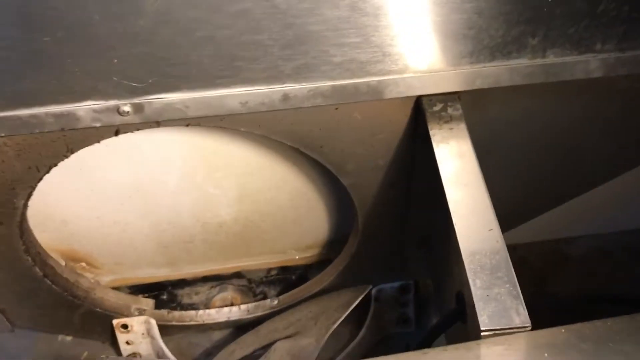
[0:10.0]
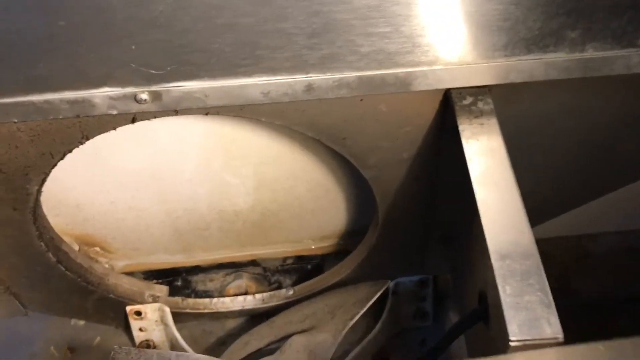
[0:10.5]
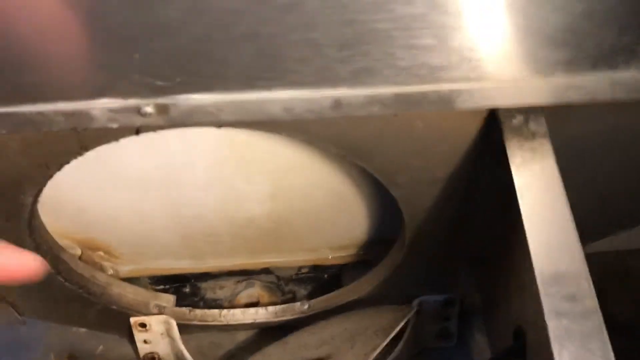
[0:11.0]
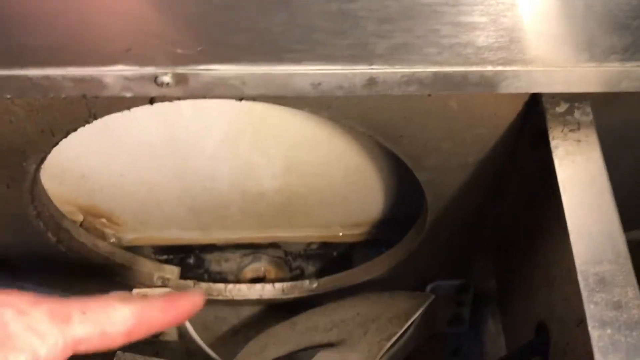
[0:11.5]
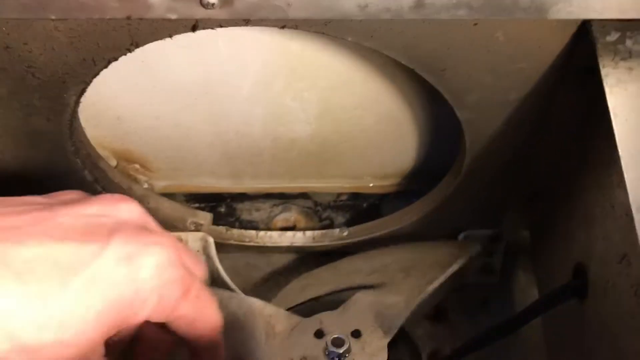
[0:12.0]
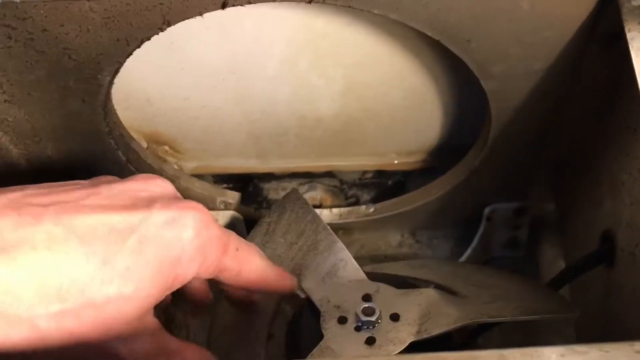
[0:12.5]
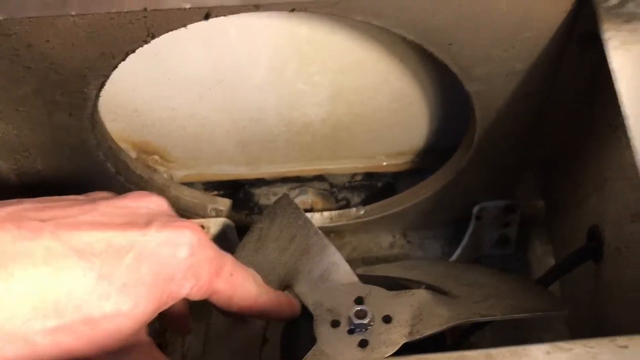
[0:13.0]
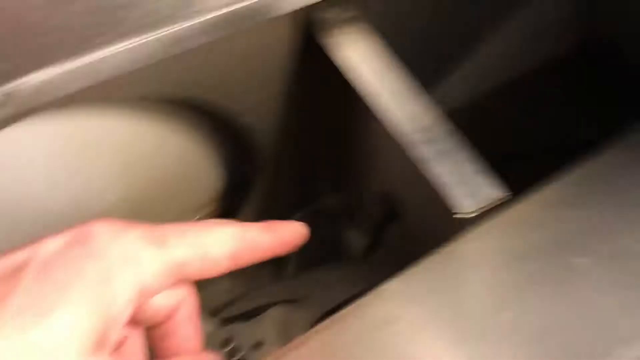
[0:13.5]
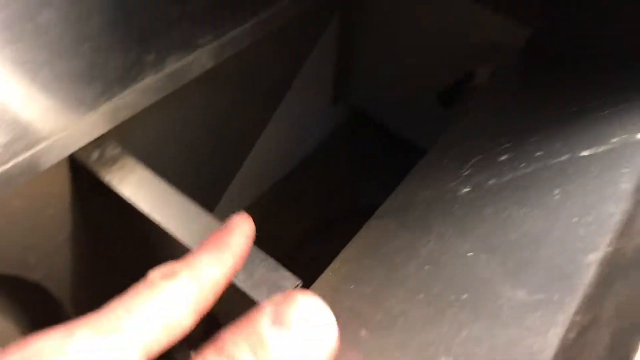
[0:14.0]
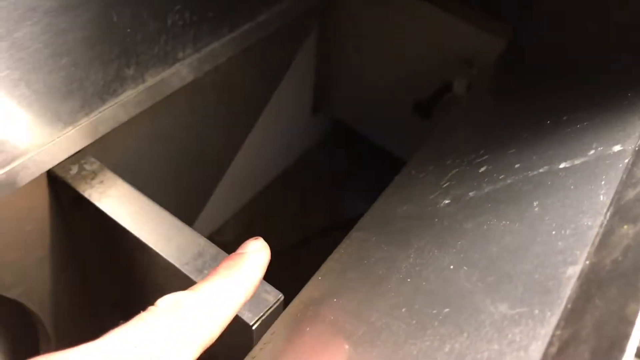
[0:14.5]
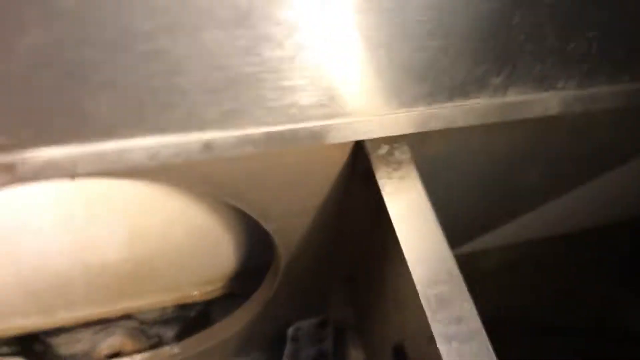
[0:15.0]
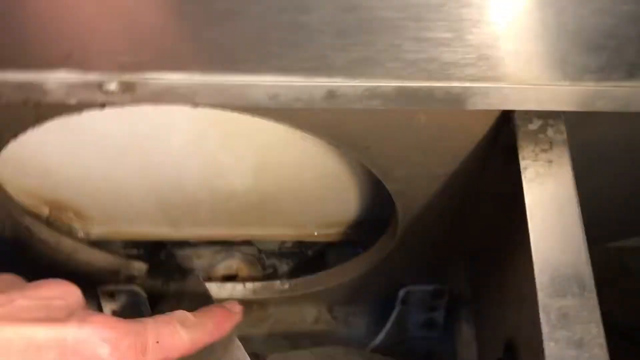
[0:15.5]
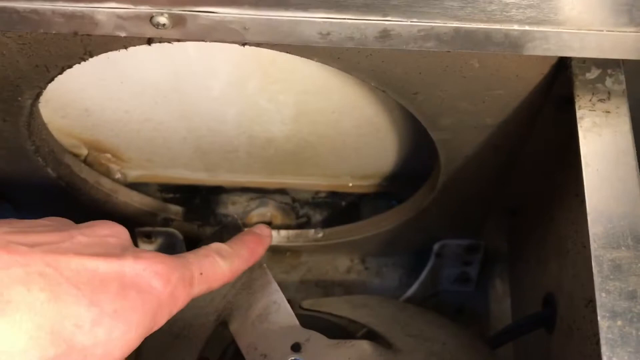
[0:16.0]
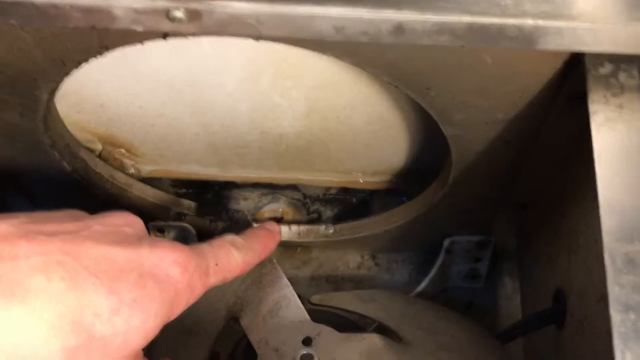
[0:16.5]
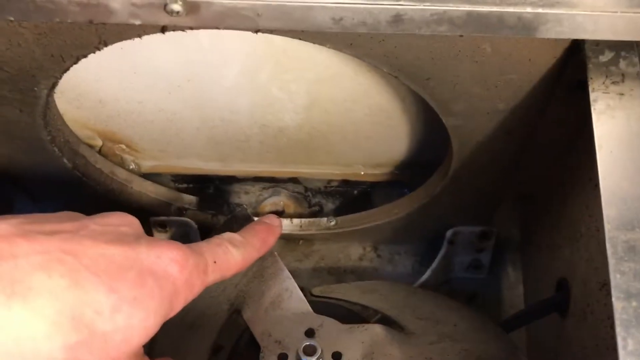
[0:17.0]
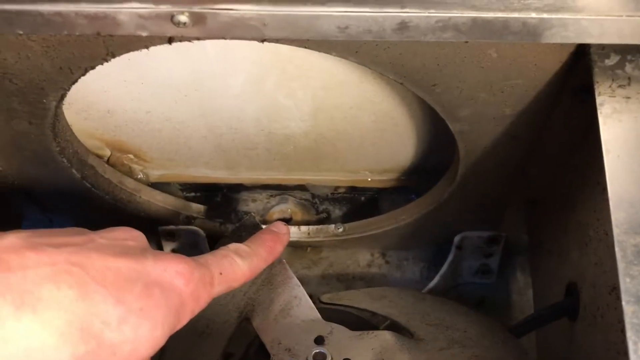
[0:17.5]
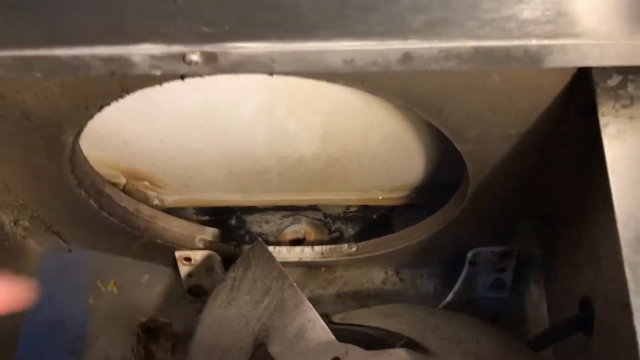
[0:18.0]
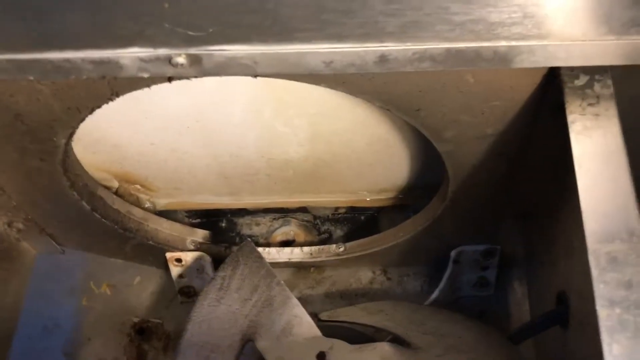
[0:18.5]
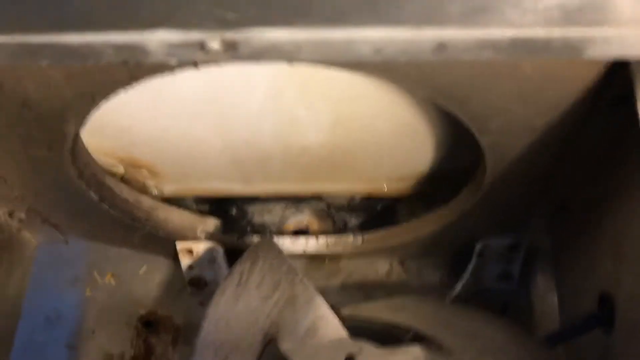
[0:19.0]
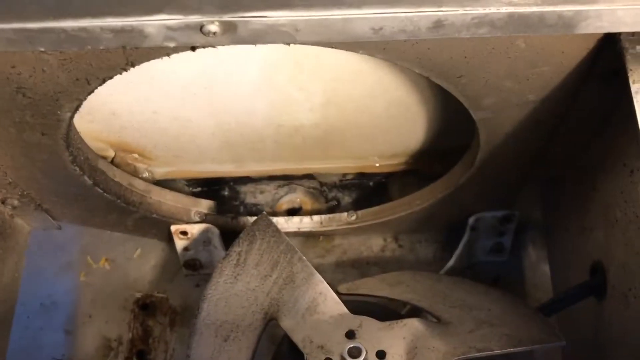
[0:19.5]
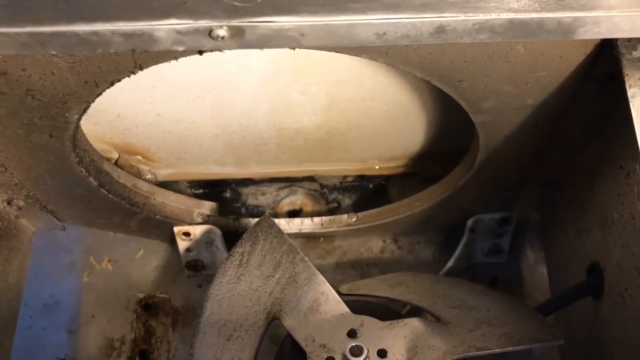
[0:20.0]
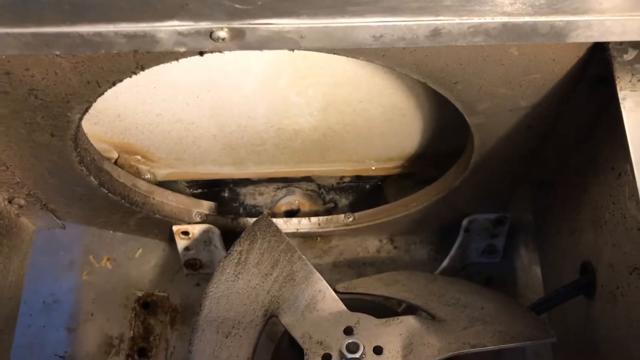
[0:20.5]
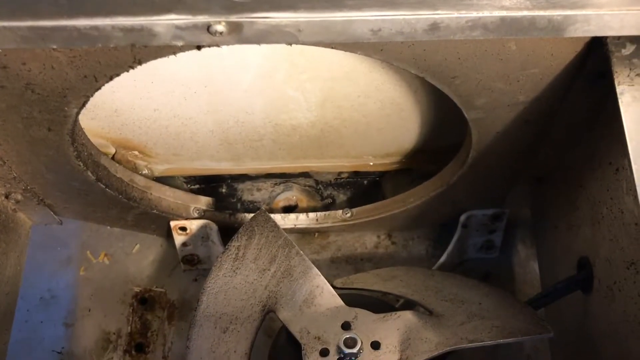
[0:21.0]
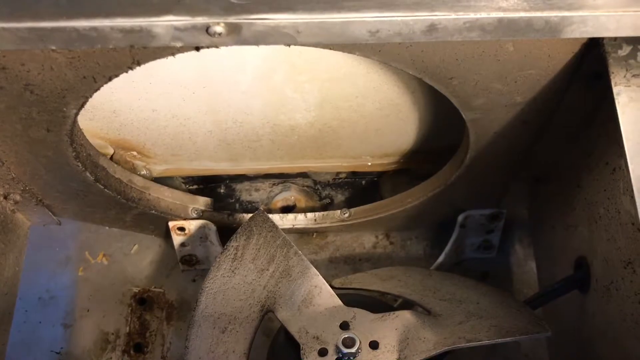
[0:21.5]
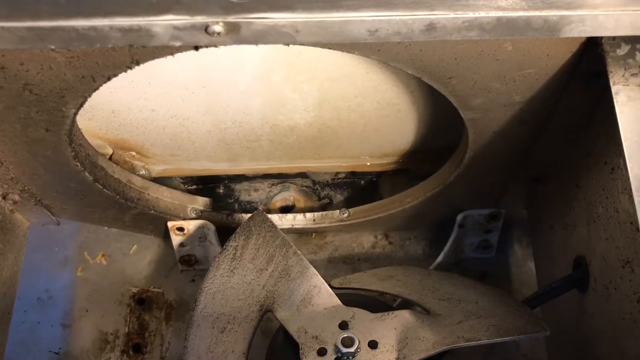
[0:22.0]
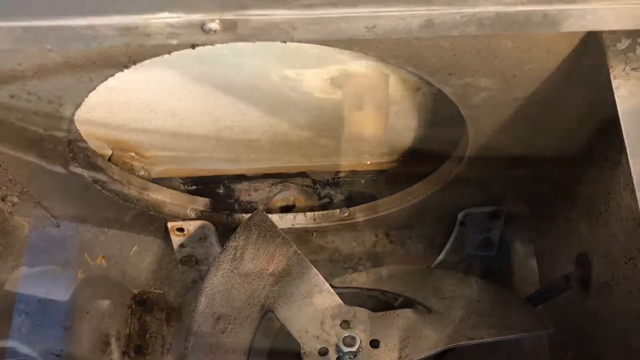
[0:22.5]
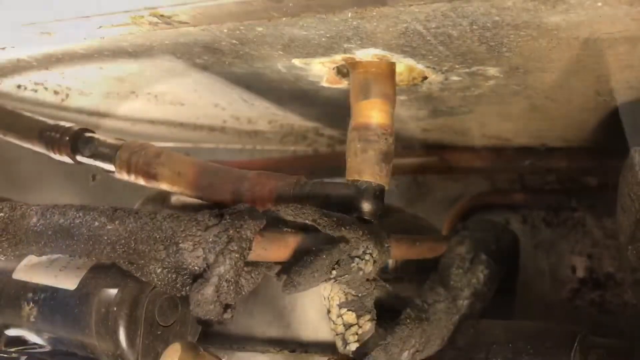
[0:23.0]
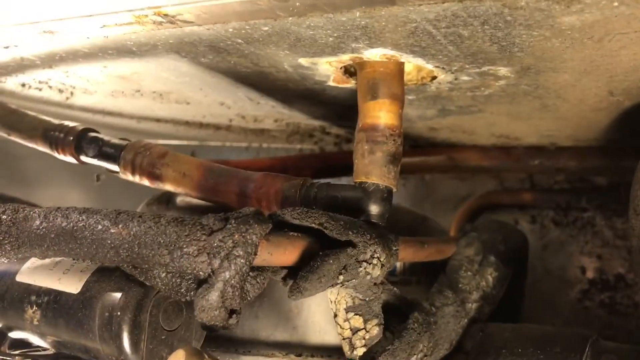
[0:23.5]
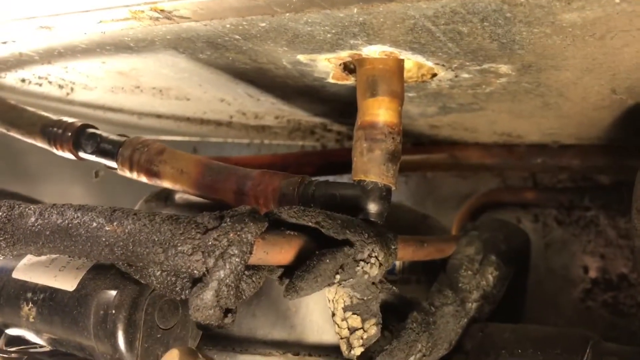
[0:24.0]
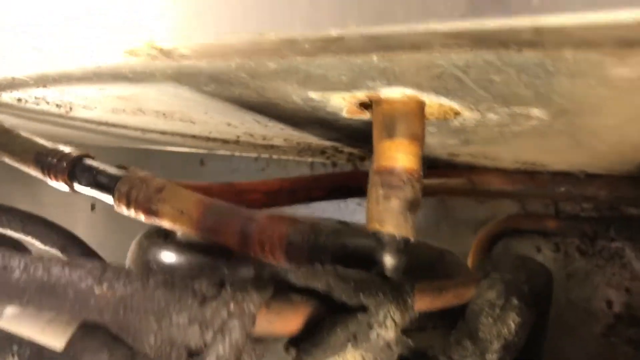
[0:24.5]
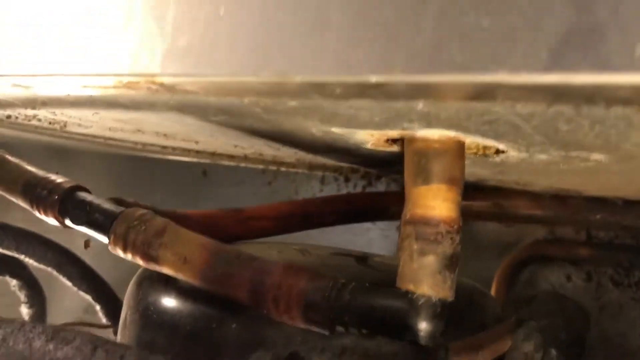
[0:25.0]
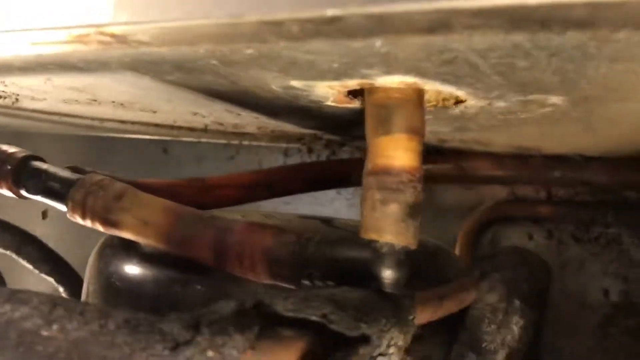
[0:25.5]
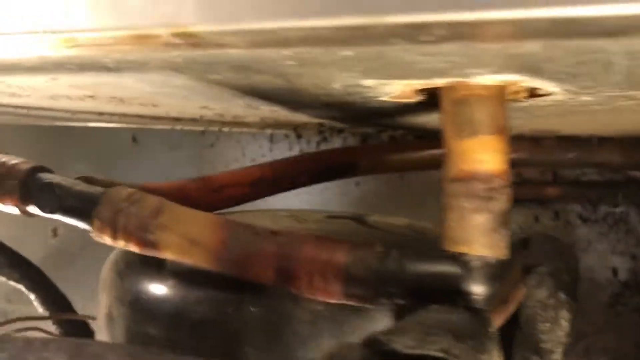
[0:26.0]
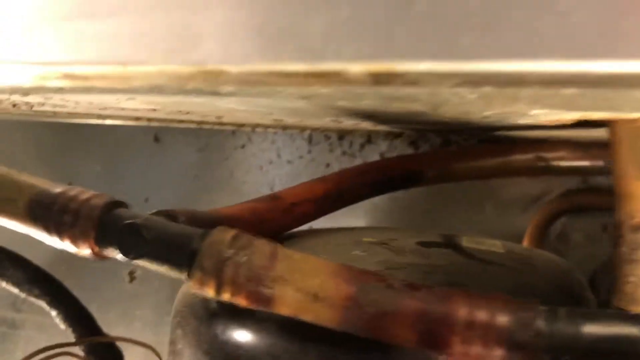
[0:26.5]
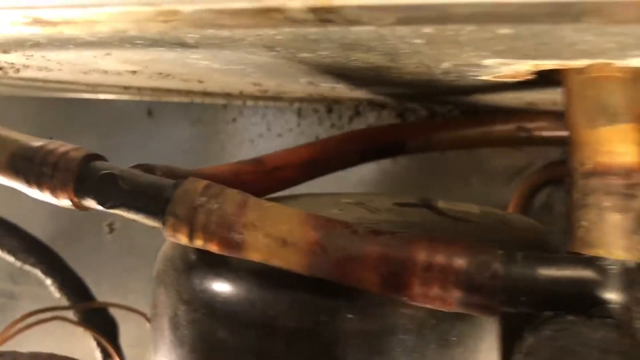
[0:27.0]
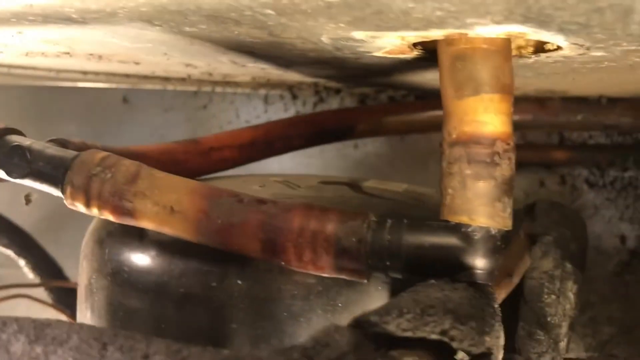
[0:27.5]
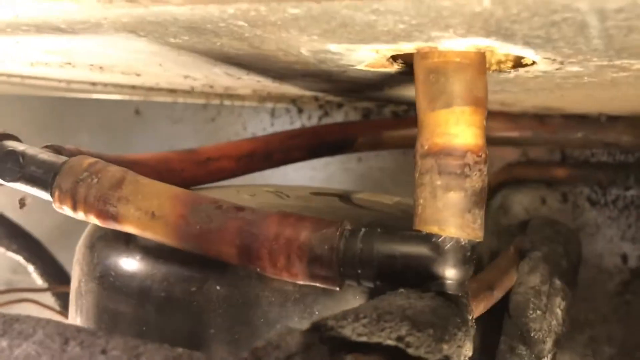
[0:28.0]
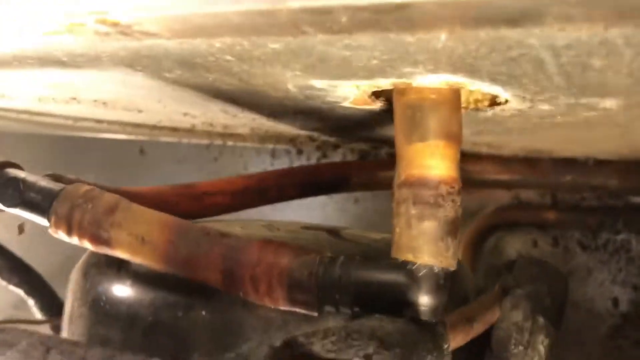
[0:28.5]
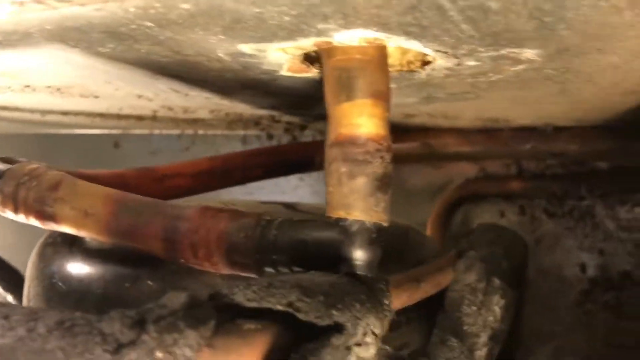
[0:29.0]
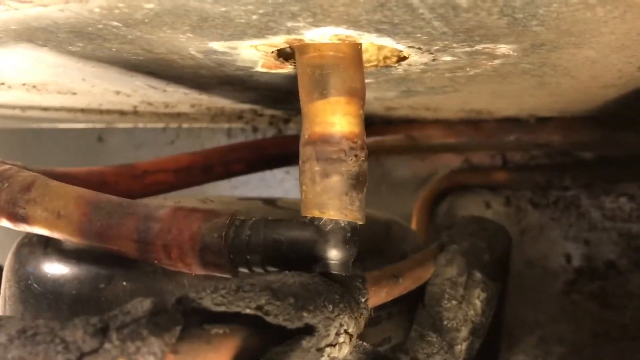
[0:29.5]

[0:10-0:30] A man's hand comes in and grabs the blade or fan object at the bottom, moving it around a little before pointing his finger up. The camera moves up to the right to an open area within the contraption, where what looks like a metal box is to the right, separated by a divider. The camera points quickly left and then back down to the fan area with the hole above it. He puts his left pointer finger onto the blade of the fan before lifting his hand out of frame, and the camera stays still on the hole and the fan. The video then fades into another shot showing what appear to be pipes connected to the contraption. One of the pipes comes out of the top, which looks like a cement floor. The pipes go around, with a copper shade to them, on top of a black cylinder-looking object.